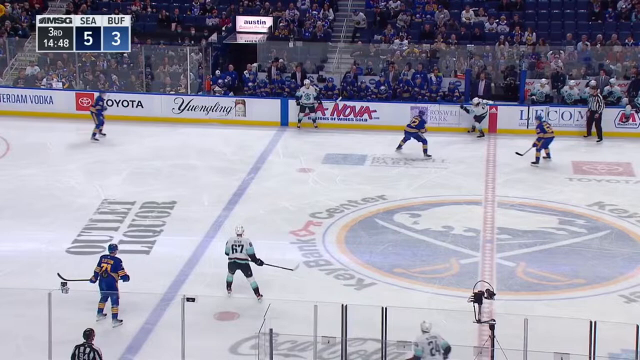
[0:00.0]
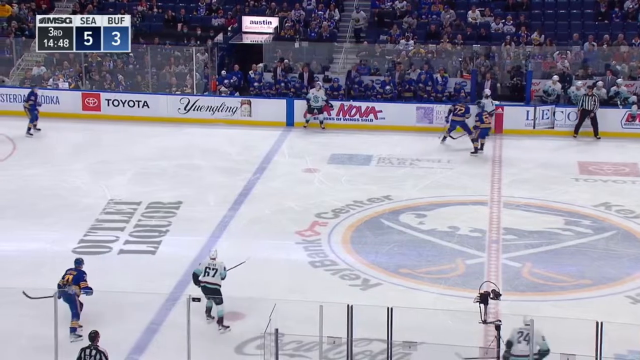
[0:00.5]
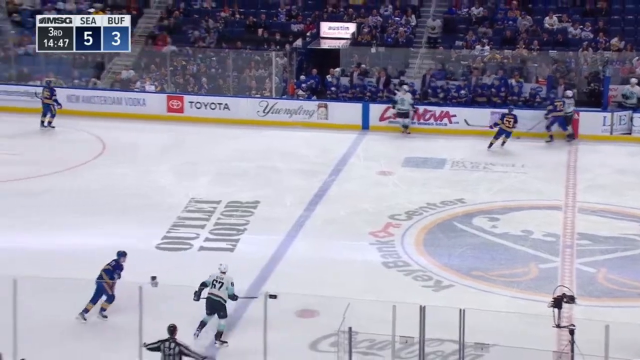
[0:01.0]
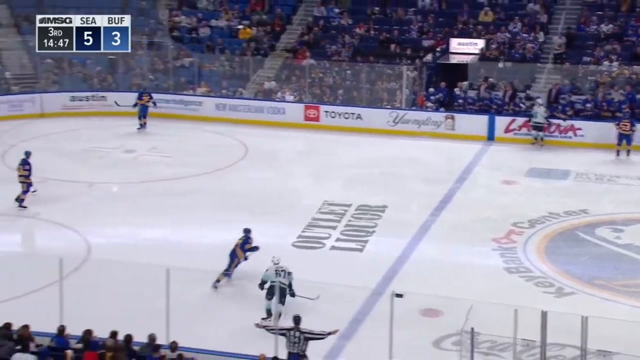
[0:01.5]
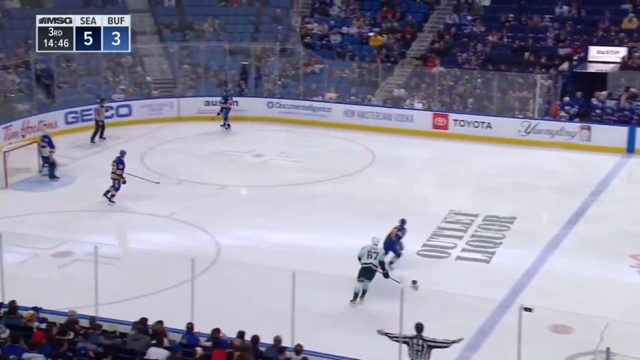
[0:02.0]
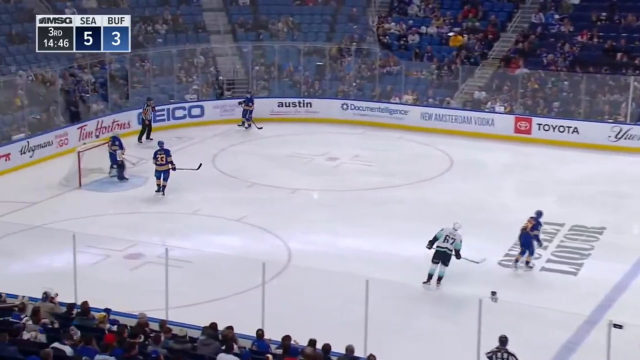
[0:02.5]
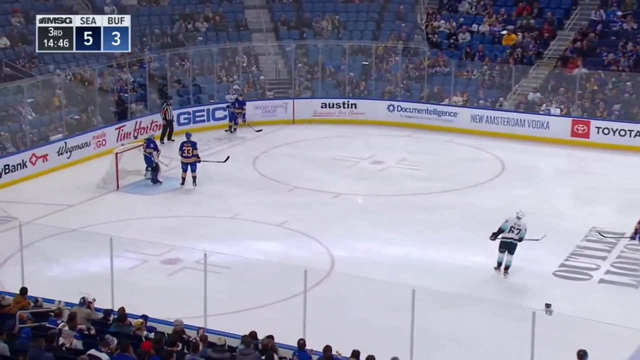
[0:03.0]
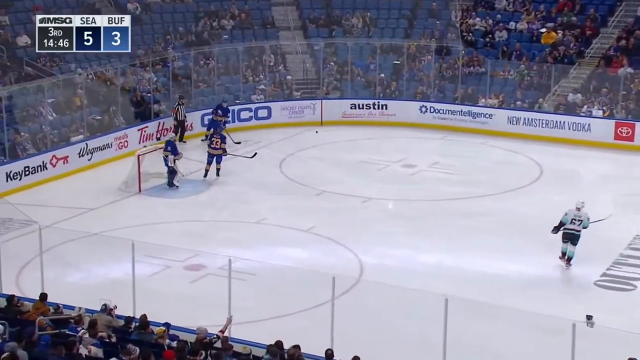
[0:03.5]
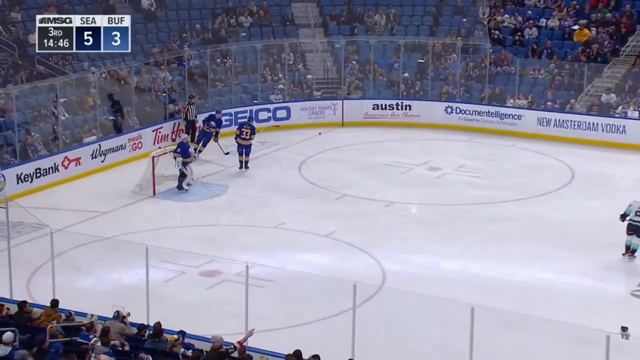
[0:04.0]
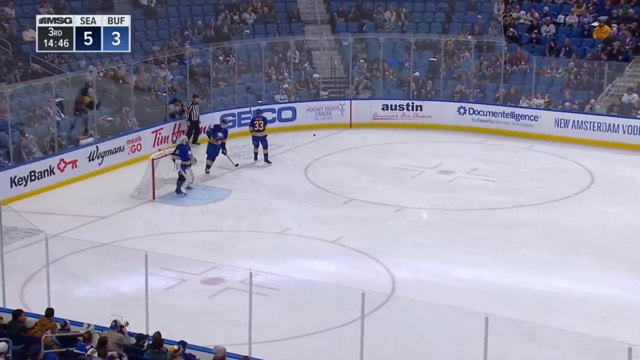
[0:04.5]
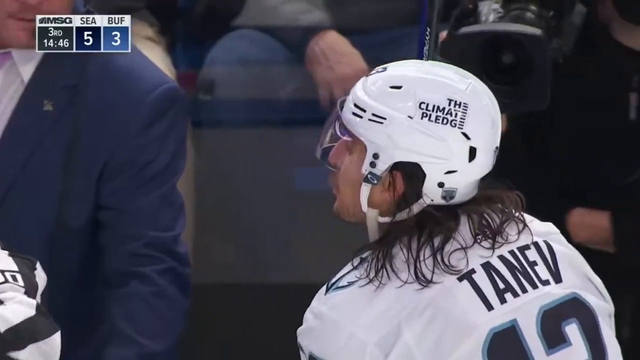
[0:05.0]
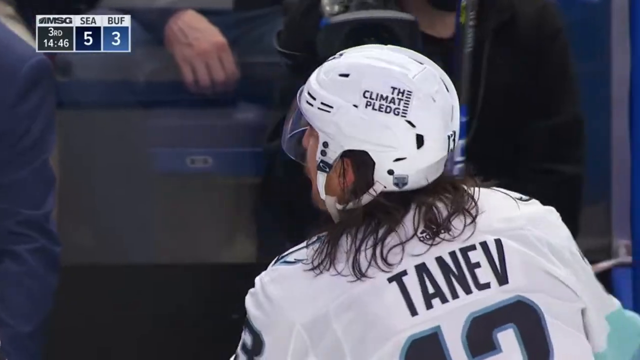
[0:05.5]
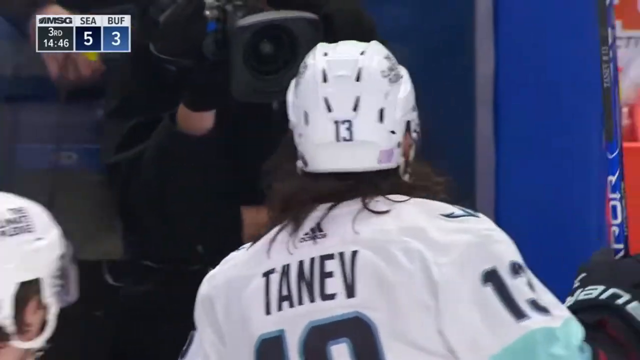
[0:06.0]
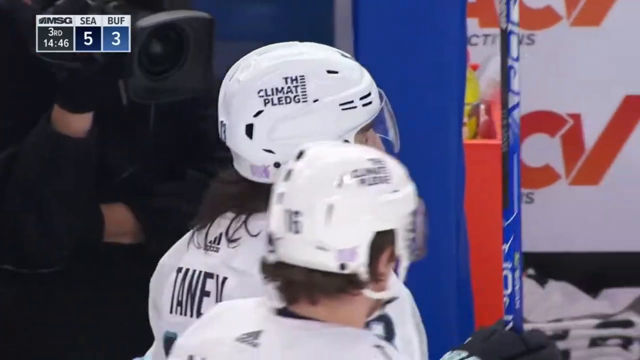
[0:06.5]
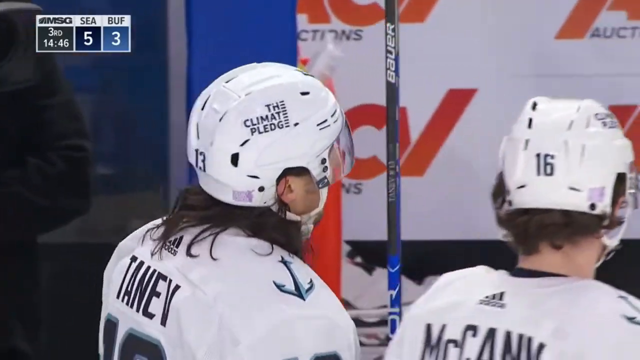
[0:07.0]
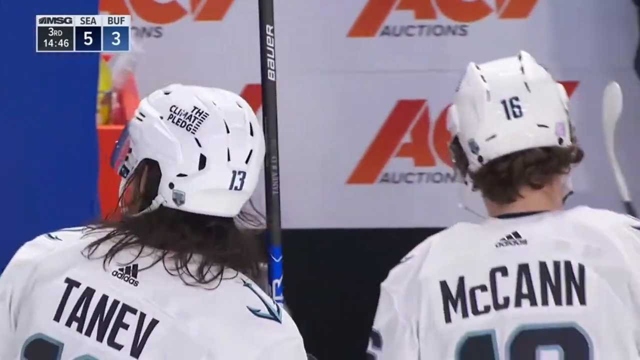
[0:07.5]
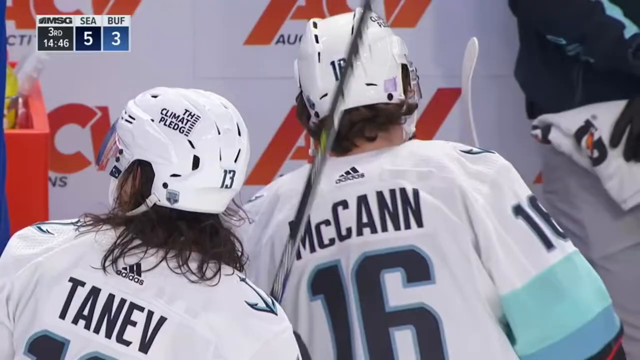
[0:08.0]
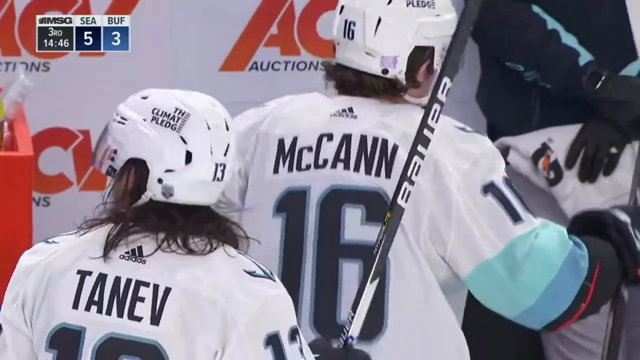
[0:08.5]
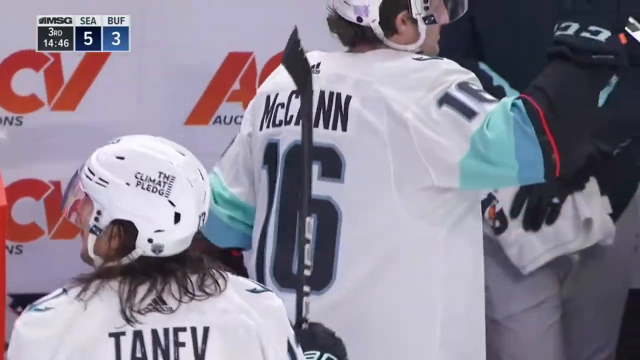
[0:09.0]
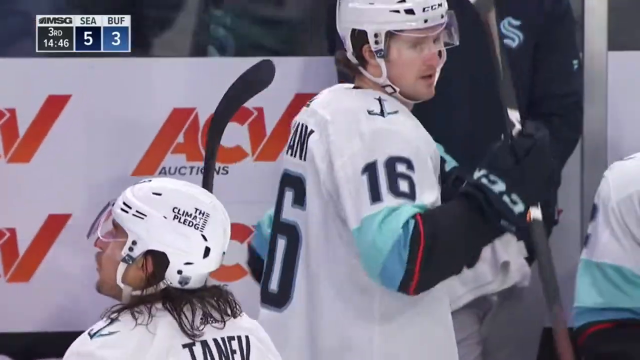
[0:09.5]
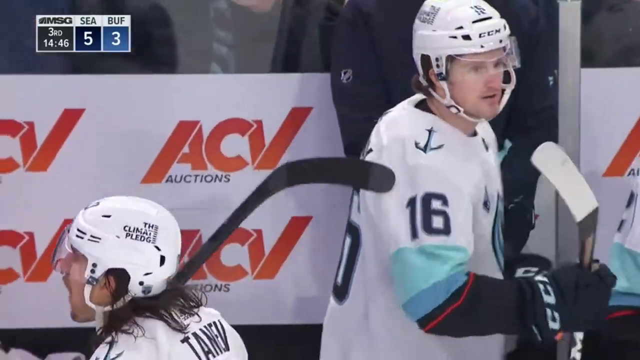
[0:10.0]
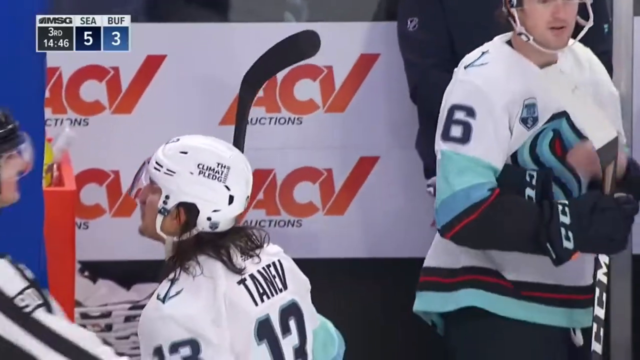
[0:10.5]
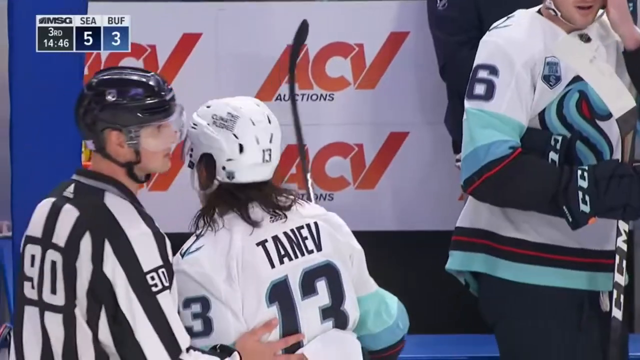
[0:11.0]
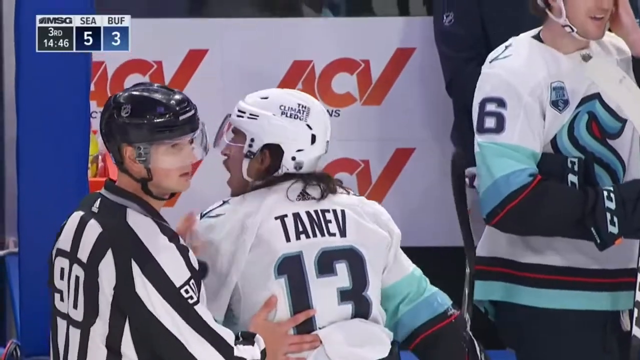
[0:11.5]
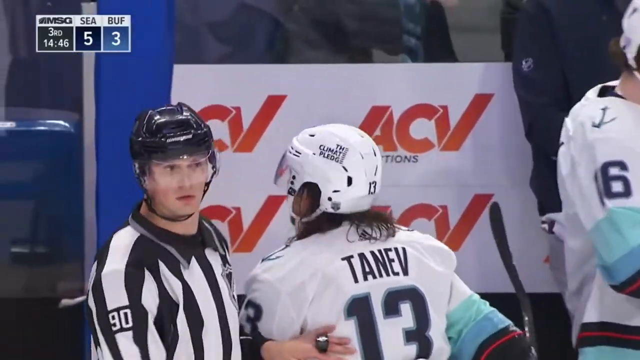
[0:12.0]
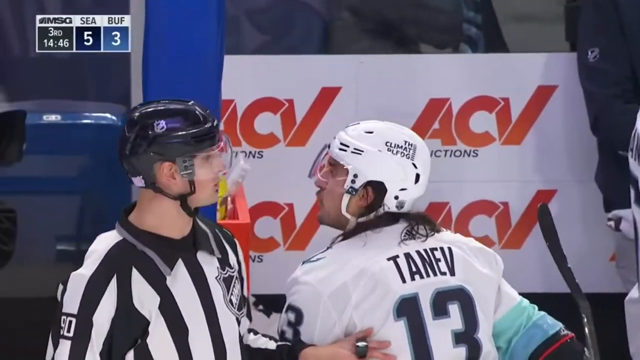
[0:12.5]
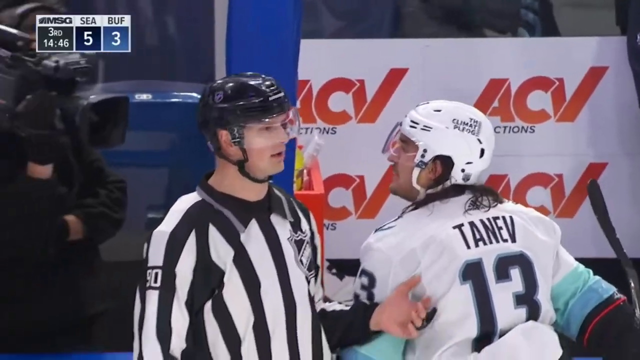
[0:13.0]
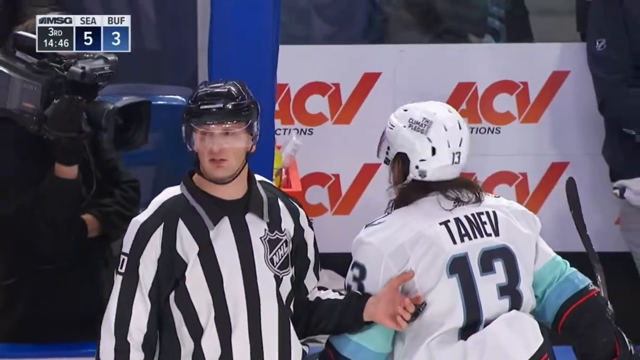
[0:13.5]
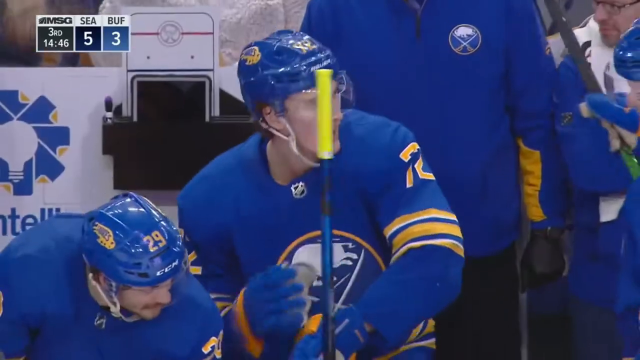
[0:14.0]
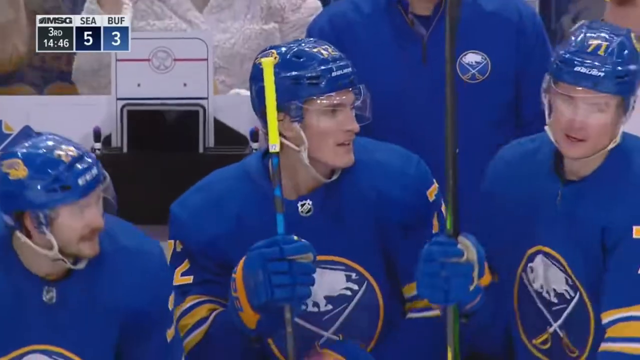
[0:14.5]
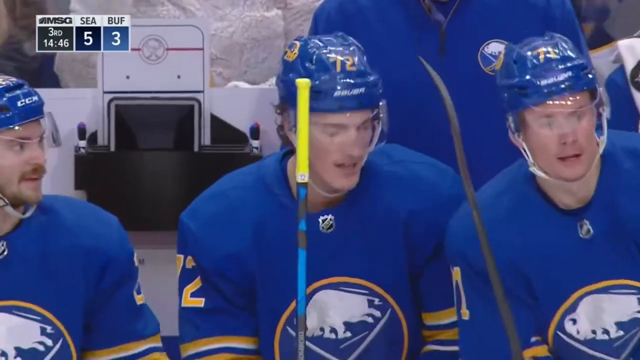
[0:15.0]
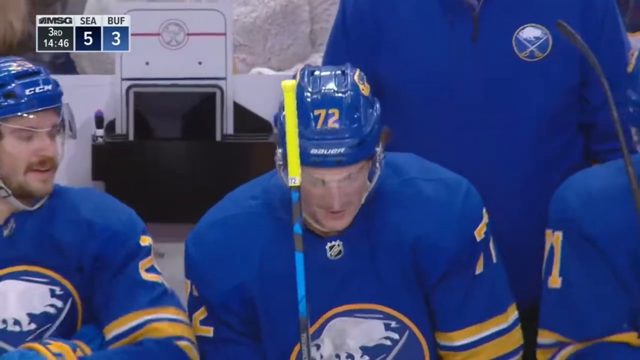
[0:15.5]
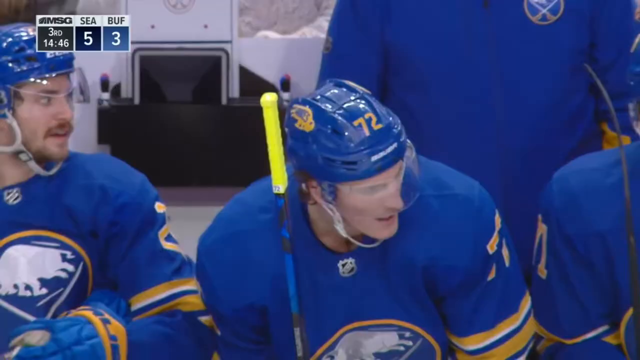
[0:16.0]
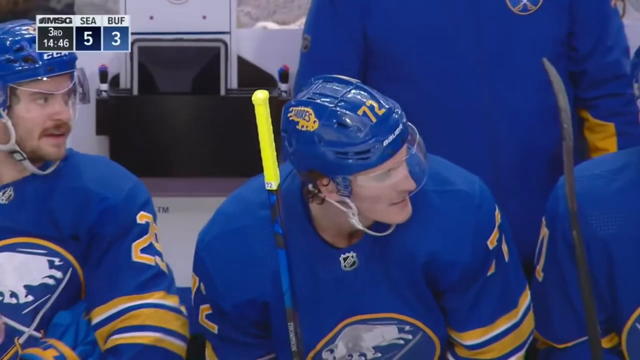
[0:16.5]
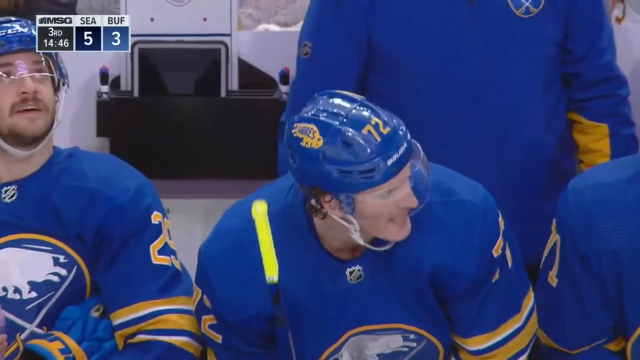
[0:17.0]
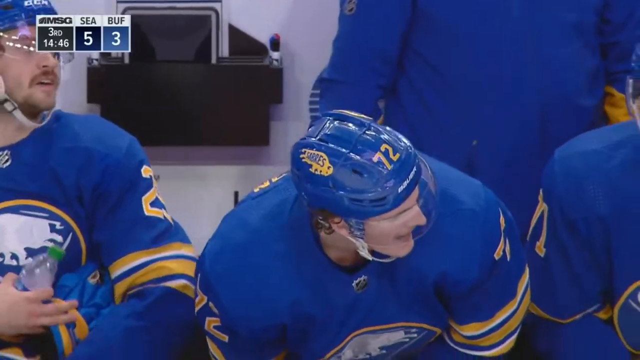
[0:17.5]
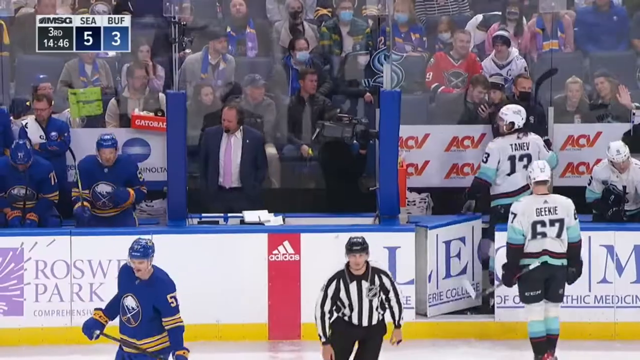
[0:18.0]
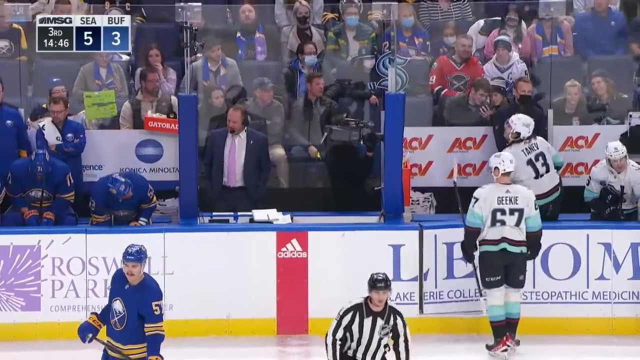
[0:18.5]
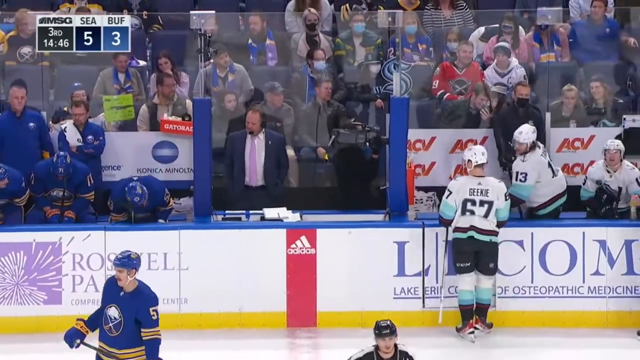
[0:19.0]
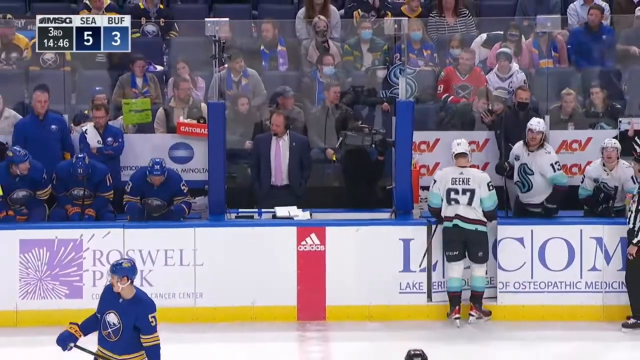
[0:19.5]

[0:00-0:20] A hockey game between Seattle and Buffalo is shown. A play is made, and there appears to be a little fight between the two teams. A couple of players are sent into the penalty box. One player yells and argues while the referee puts him into the penalty box, and the player going in is shown to be Tanev. There was apparently some sort of foul, and the game is stopped. The player argues with another player as he is sent into the penalty box; Tanev from Seattle appears to have a penalty. The game looks like it is at Madison Square Garden, apparently the series final, and it looks like the third quarter. The scoreboard shows Seattle with five and Buffalo with three.